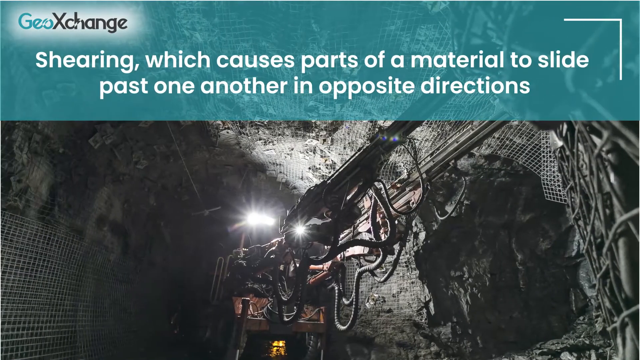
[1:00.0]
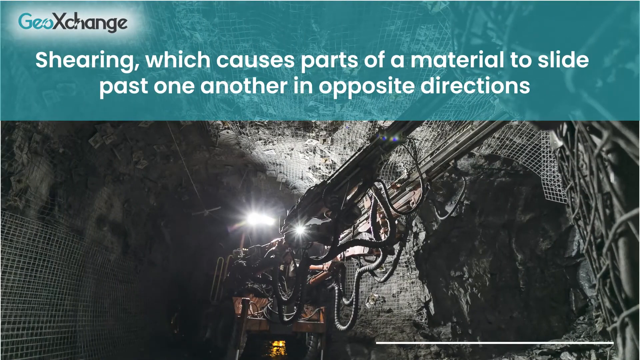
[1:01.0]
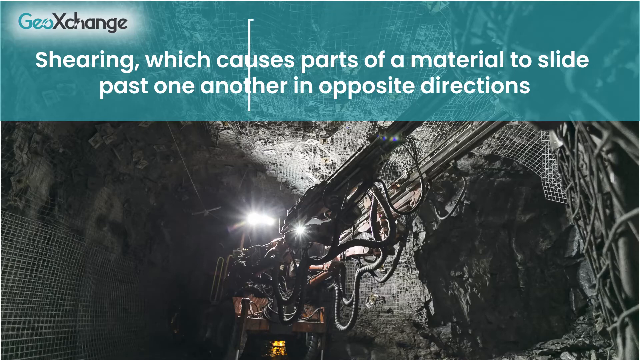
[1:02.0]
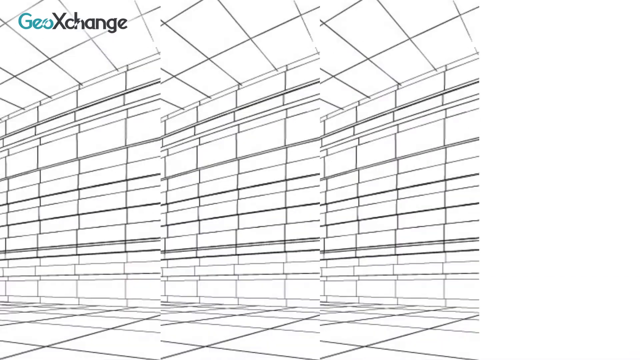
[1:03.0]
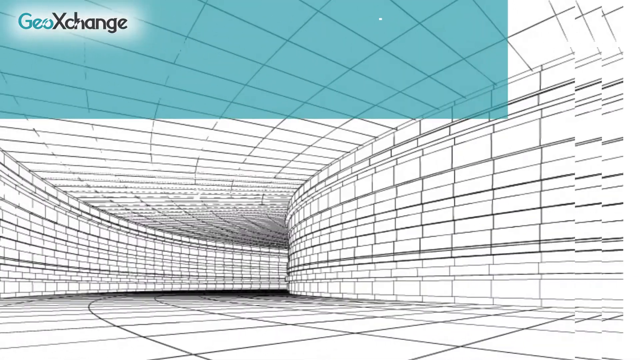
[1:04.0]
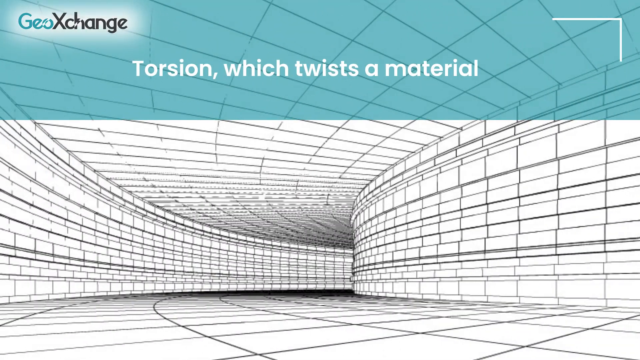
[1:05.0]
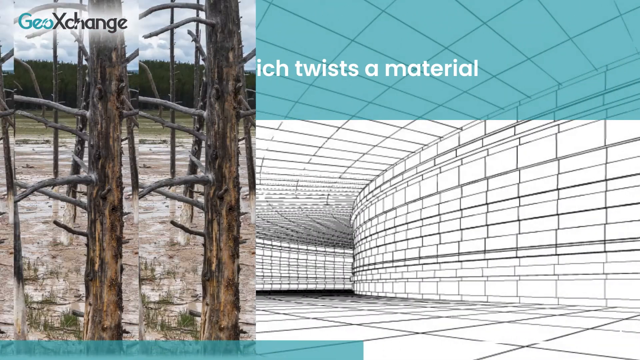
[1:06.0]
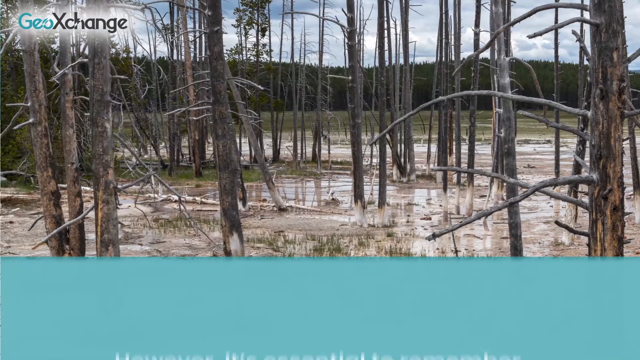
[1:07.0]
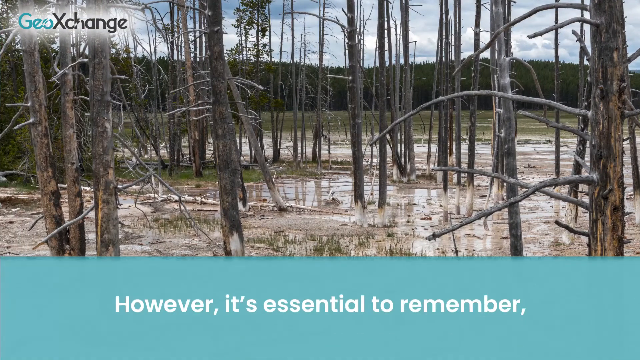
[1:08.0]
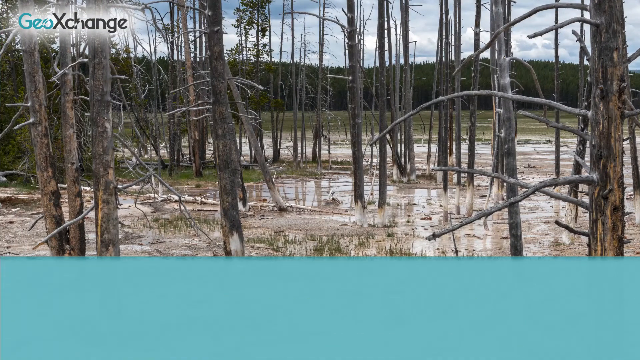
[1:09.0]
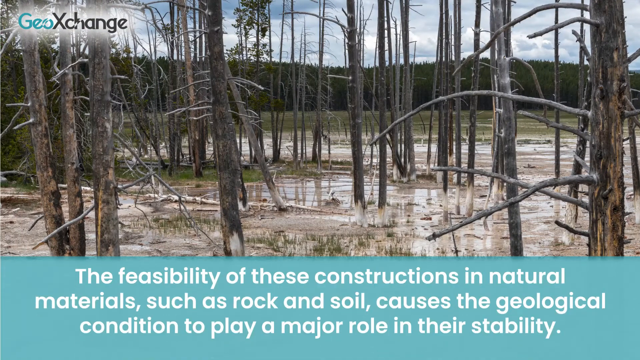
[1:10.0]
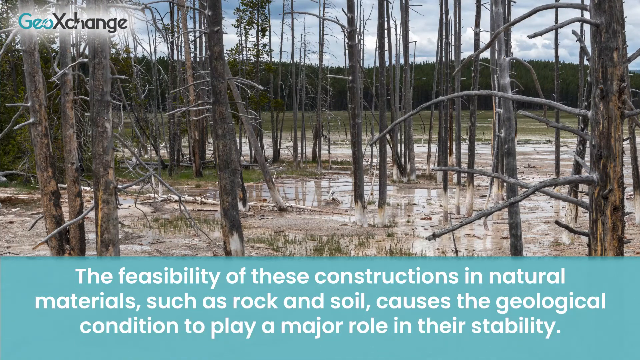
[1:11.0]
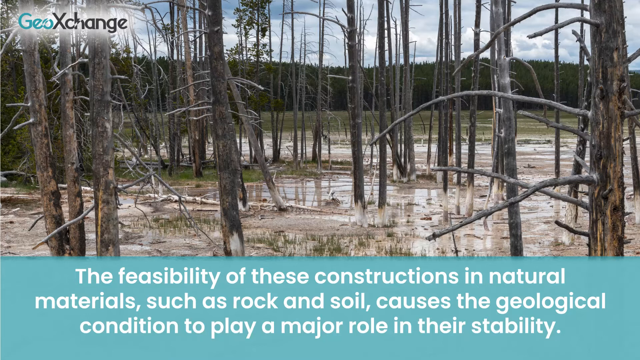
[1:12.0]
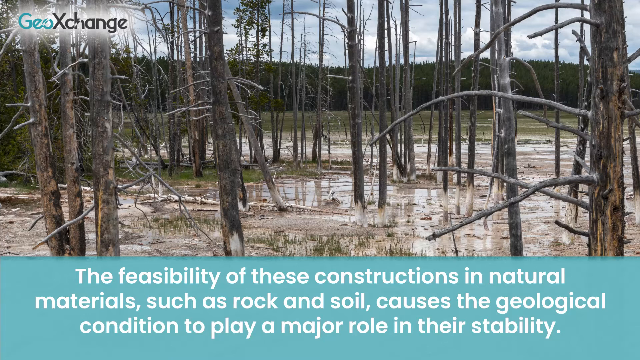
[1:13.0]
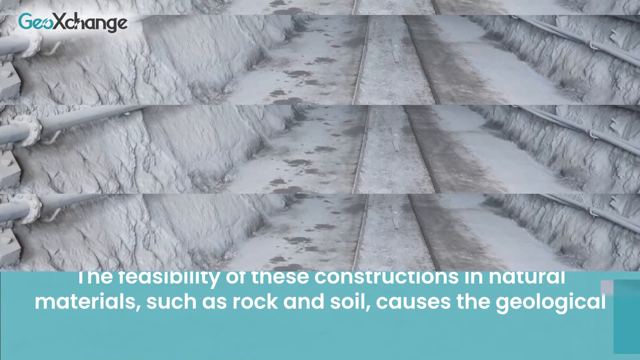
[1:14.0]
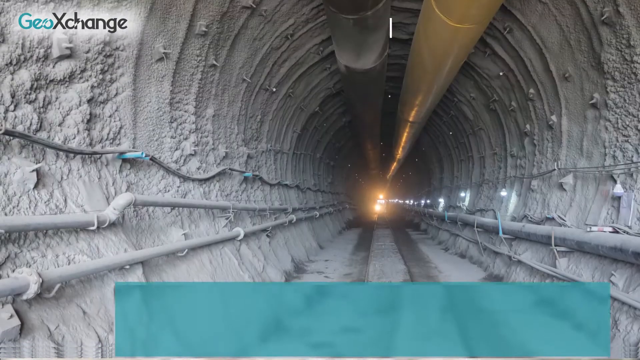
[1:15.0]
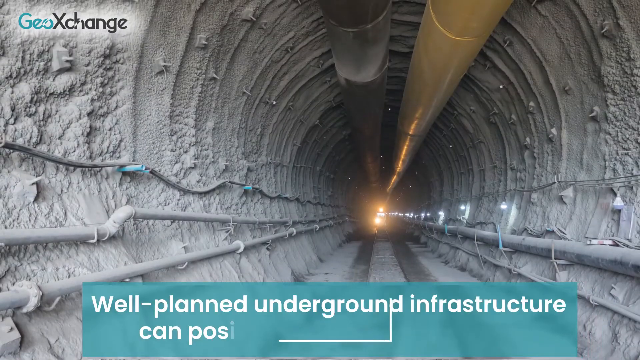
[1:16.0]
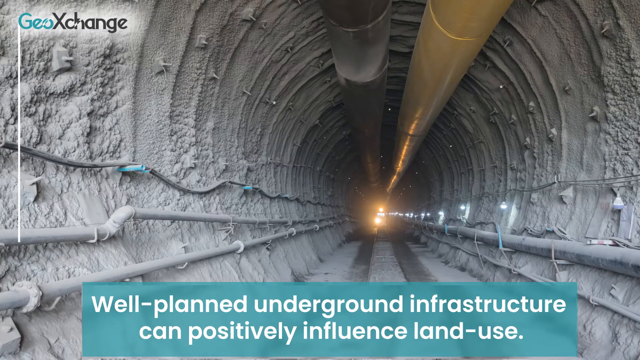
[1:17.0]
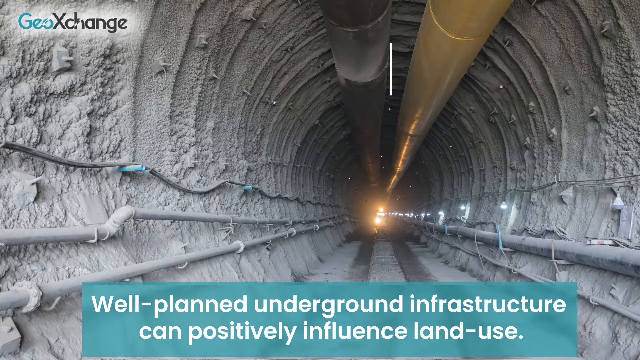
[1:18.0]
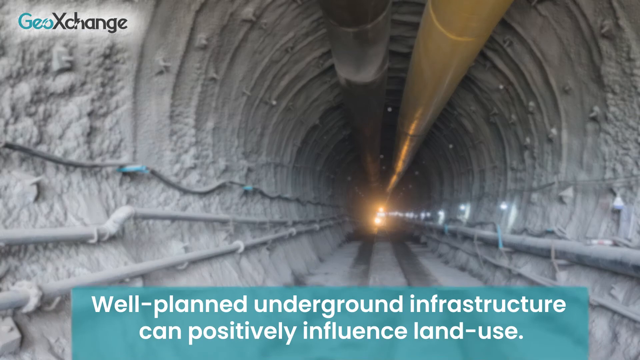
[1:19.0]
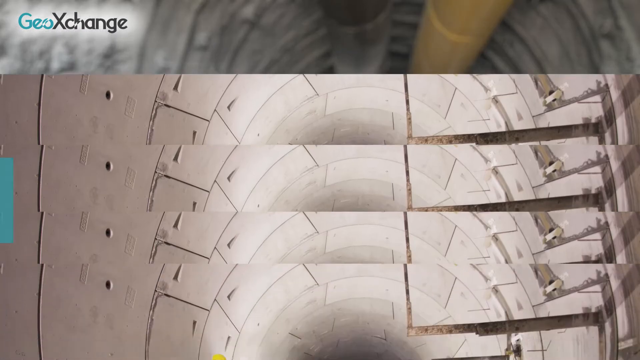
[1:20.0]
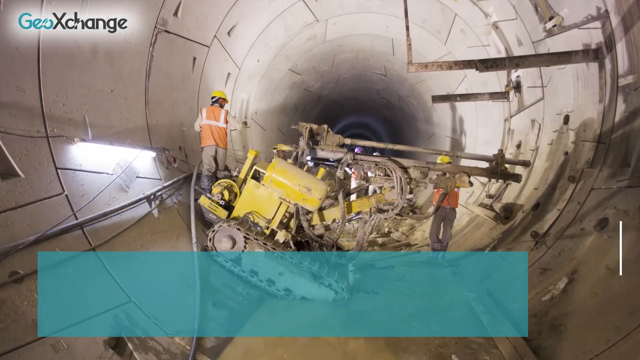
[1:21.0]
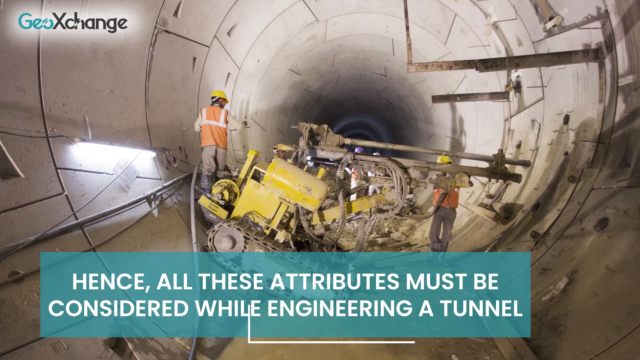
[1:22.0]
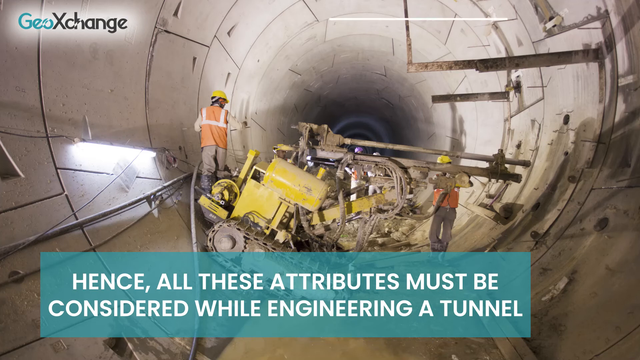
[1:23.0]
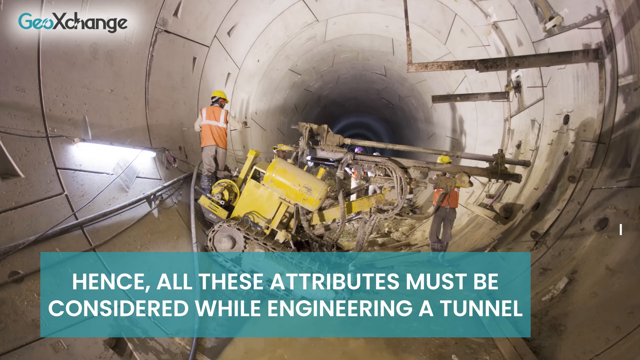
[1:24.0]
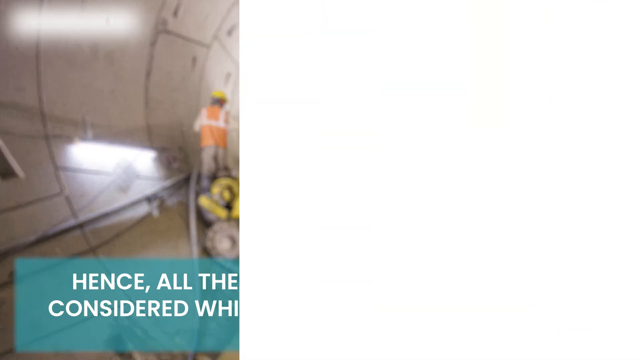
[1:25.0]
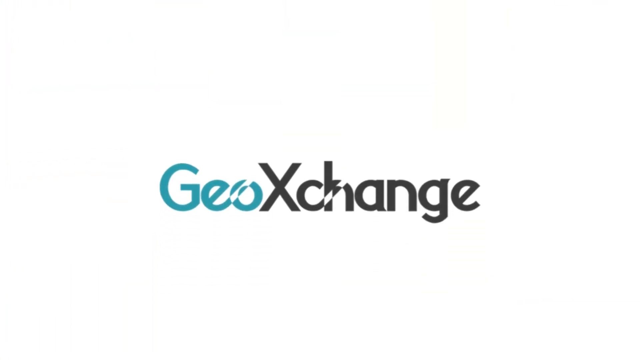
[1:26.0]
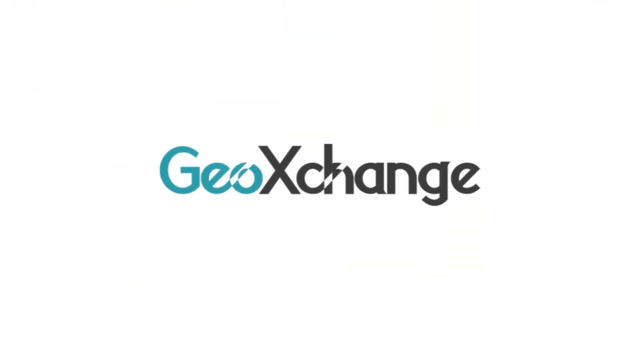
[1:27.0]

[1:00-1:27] The statement "shearing which causes parts of material to slide past one another in opposite directions" continues with the image of the light in the tunnel. Then the video moves to "torsion which twists a material", with what looks to be sort of a mock-up blueprint drawing of a tunnel in black and white. Next is an image of a sort of flooded forest, with trees poking out of very wet, flooded ground, and a statement reading "however, it's essential to remember the feasibility of these constructions in natural materials such as rock and soil causes the geological condition to play a major role in their stability". Another image shows a tunnel being built, possibly a train tunnel, with the statement "well planned underground infrastructure can positively influence land use". A new slide reads "hence, all these attributes must be considered when engineering a tunnel"; the background image shows two construction workers working on a tunnel that looks like it has been well built and established already, with some yellow electrical equipment in the tunnel with them.